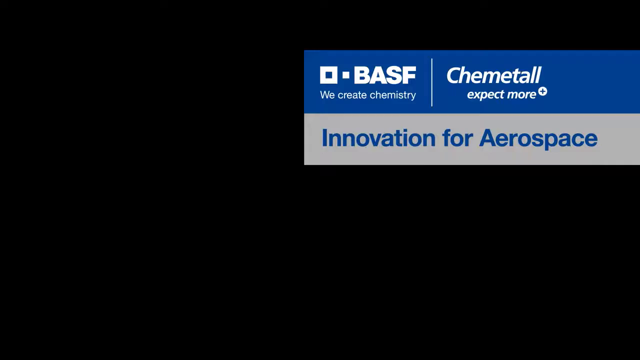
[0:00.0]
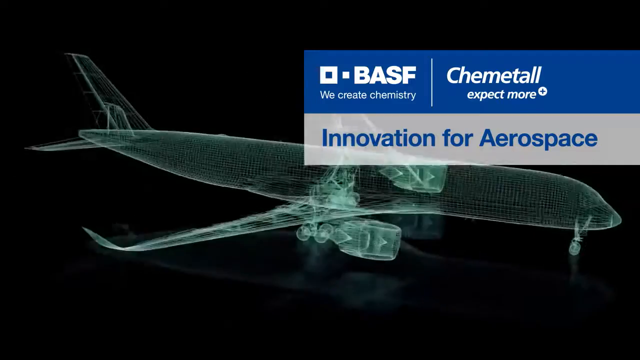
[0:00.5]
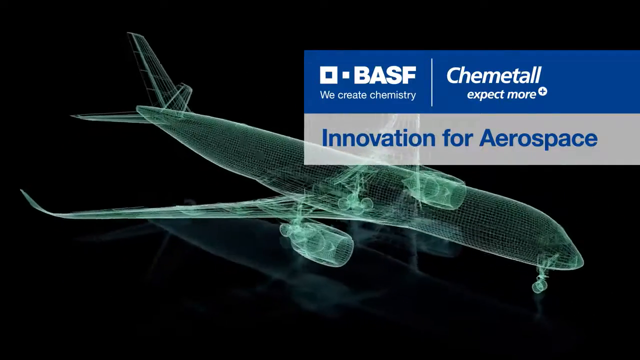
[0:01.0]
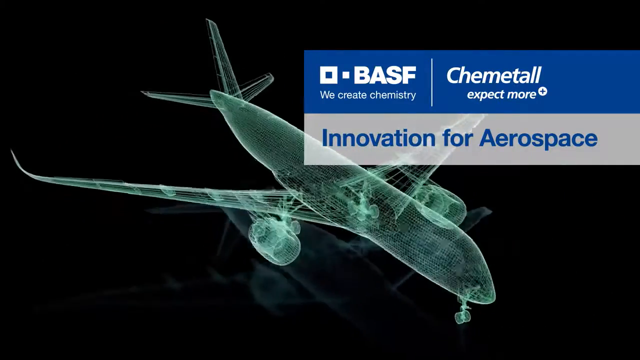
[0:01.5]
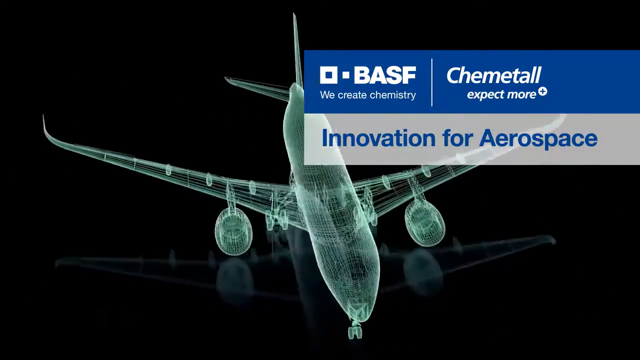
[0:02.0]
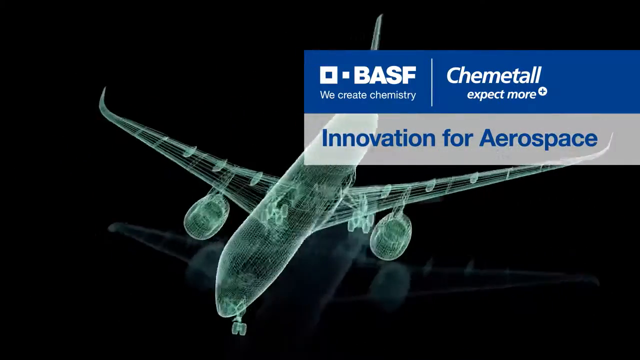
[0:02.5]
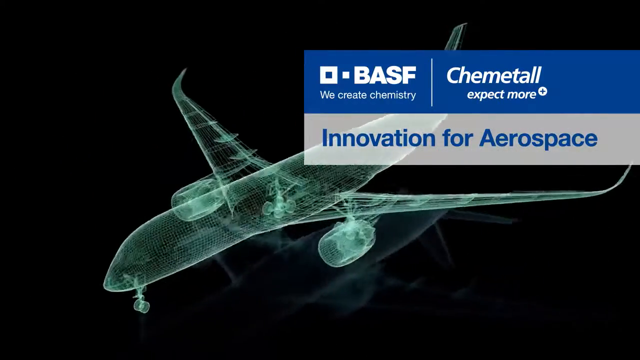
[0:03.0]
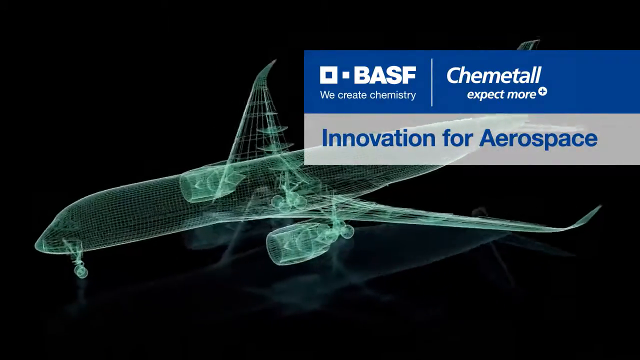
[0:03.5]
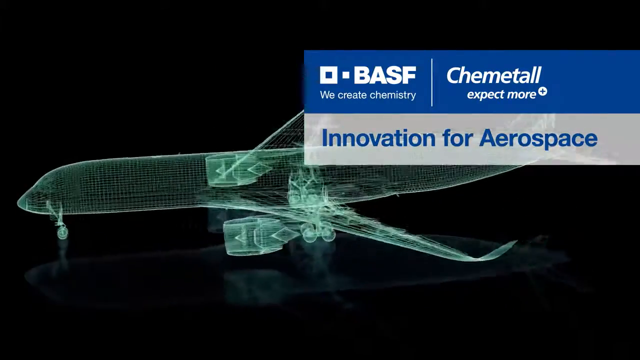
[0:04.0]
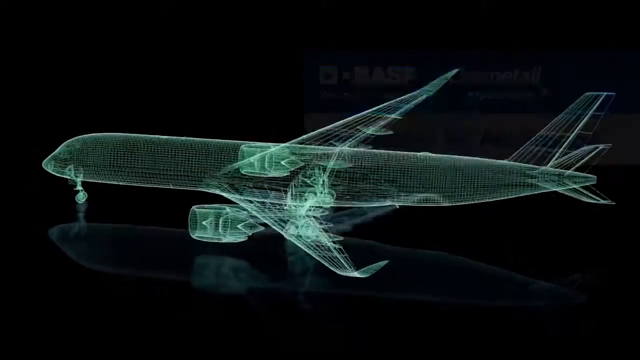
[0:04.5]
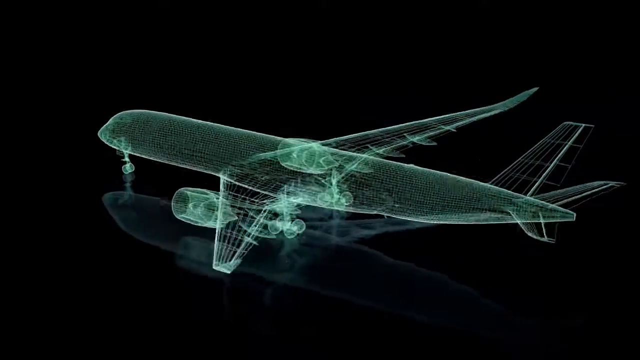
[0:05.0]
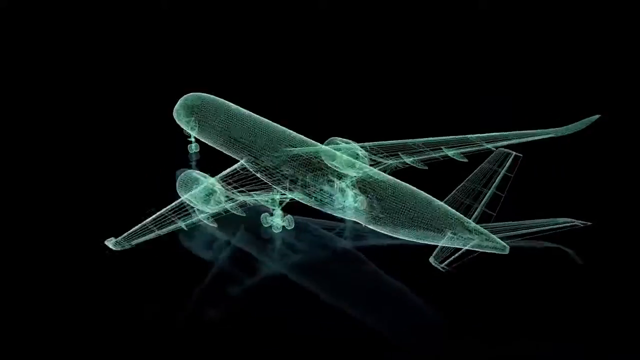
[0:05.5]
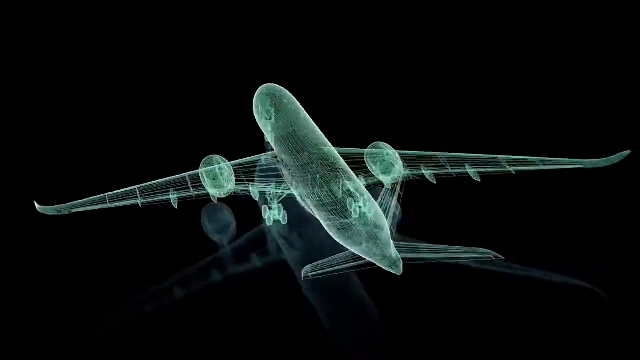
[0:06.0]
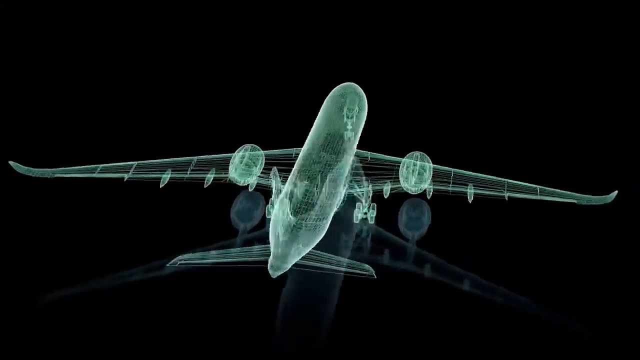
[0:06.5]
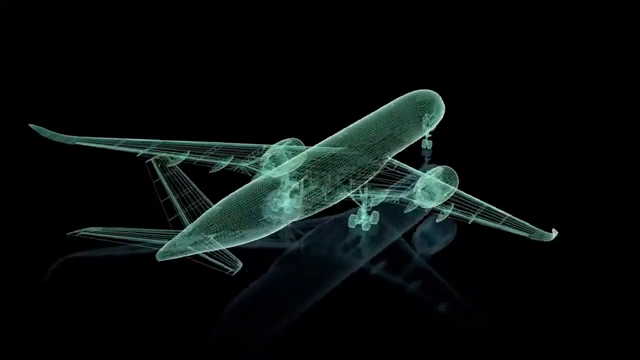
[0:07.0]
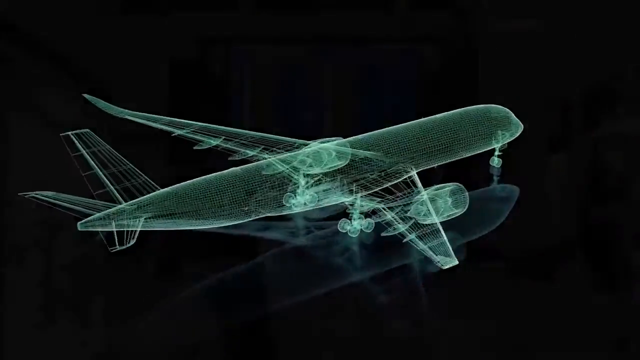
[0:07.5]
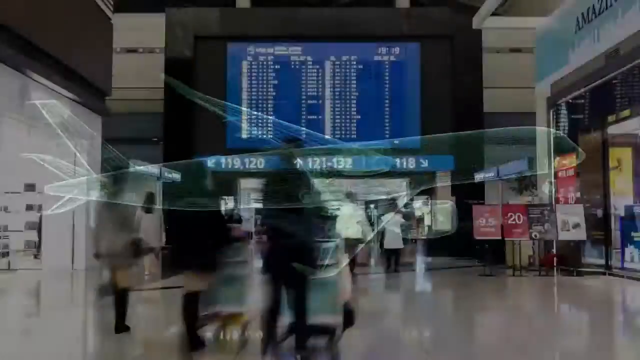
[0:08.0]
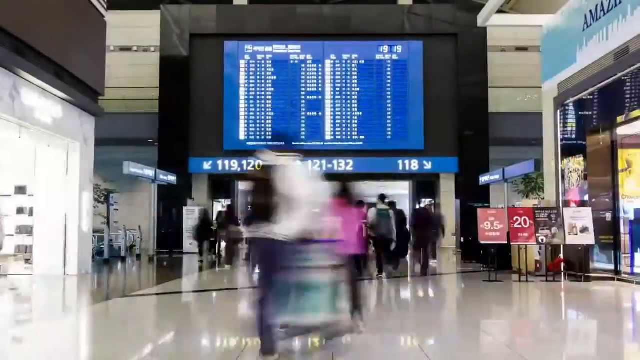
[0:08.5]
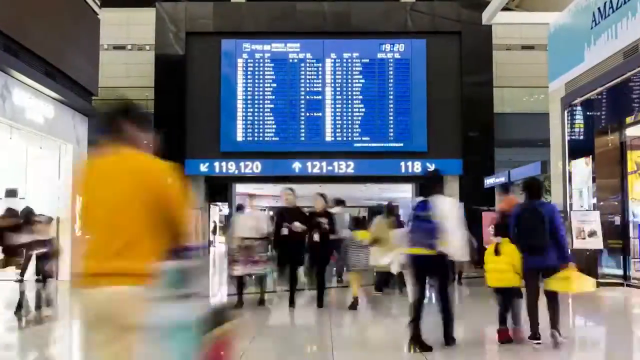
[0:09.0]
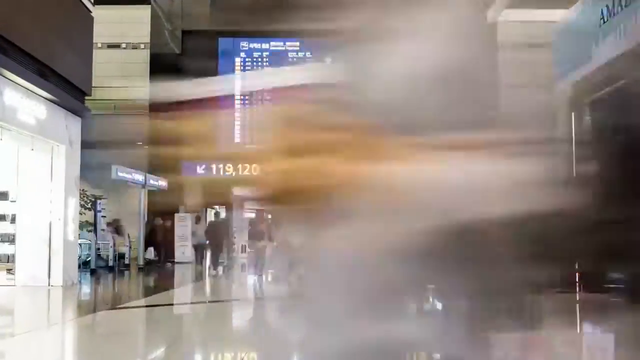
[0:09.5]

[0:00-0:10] The video opens on a black screen with a rectangular logo on the upper right side. The rectangle is split into a top and a bottom part. The top part is a purplish color with white font reading "BASF," with a square in front of it, and "we create chemistry." Then there is a line, and to the right of it the text reads "Chemetall," with "expect more" underneath and a little white circle with a plus sign inside. The bottom section is gray, with purple font reading "innovation for aerospace." The video then transitions to a background image of an airplane: a 3D image that looks like a computer graphic, a diagram showing all the different parts of the airplane. It is see-through, showing the schematics as if designed on some kind of sketch, and it spins in circles to give a 360-degree 3D view. The image then changes to the inside of an airport, where lots of people walk toward an airport gate. On the left, signs read gates "119" and "120"; in the middle, "121" through "132"; and on the right, "118," with arrows pointing in the directions of those gates. At the top is a gigantic screen showing flights landing, taking off and arriving. The footage is sped up, showing people walking very quickly in and out and back and forth.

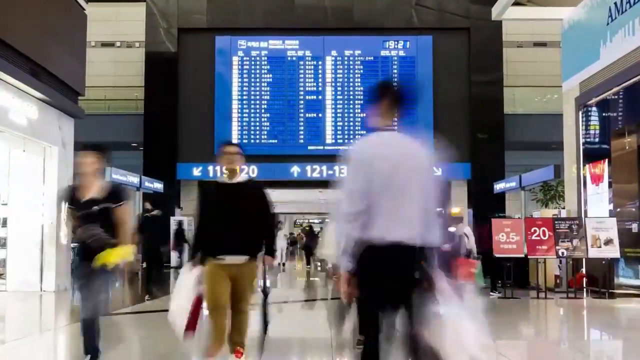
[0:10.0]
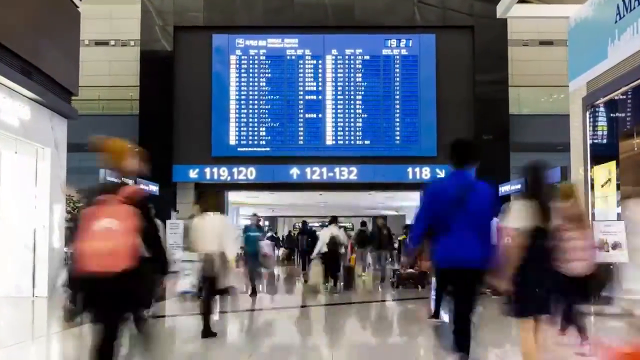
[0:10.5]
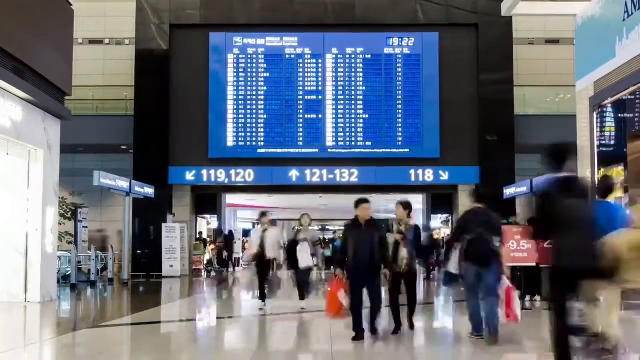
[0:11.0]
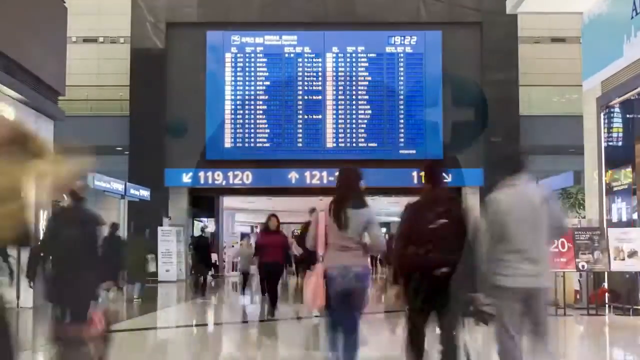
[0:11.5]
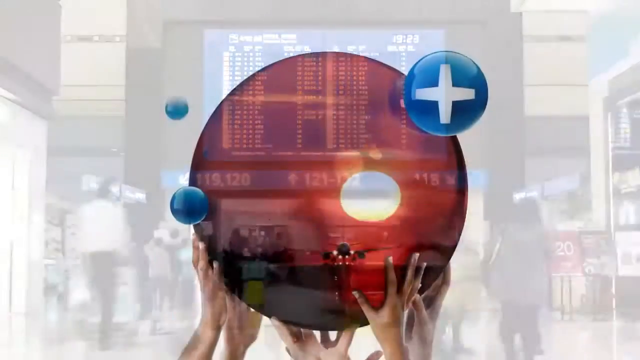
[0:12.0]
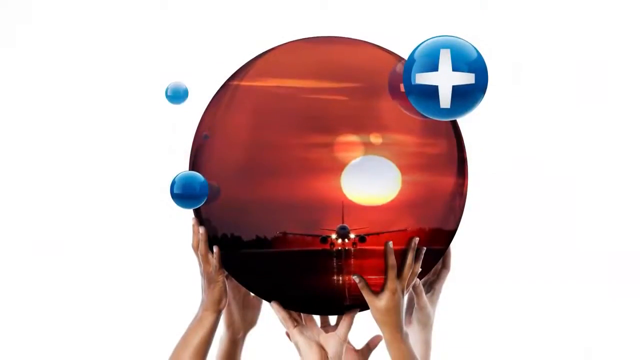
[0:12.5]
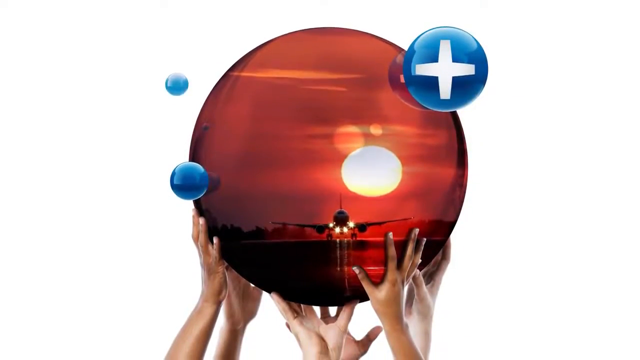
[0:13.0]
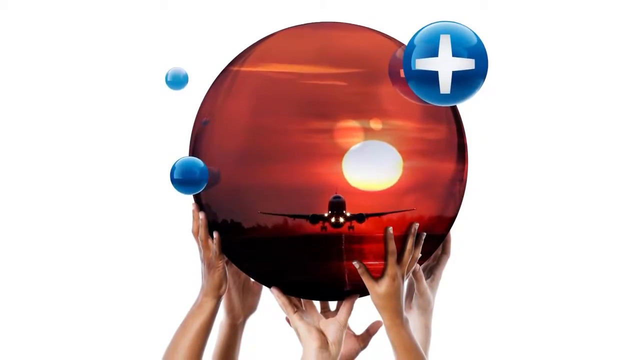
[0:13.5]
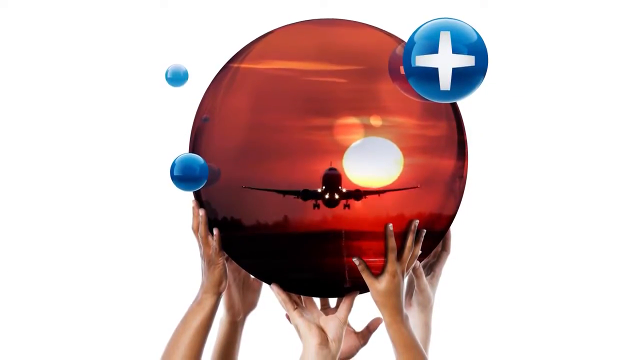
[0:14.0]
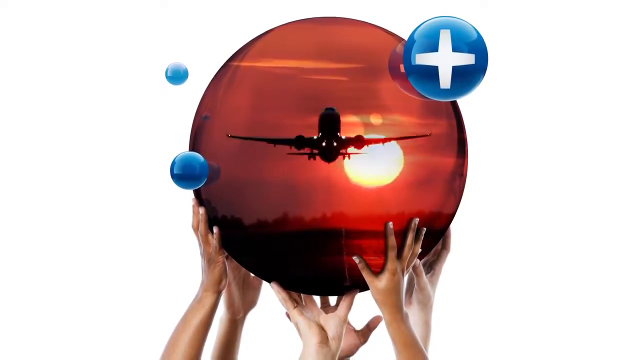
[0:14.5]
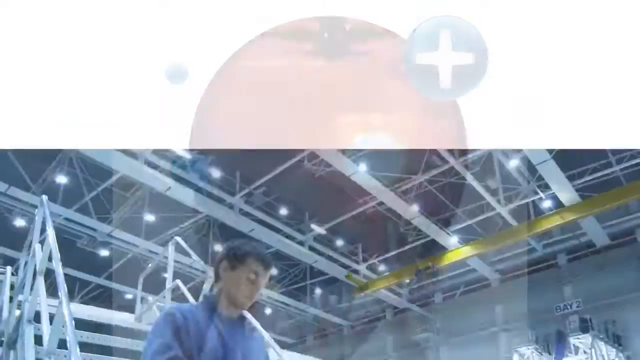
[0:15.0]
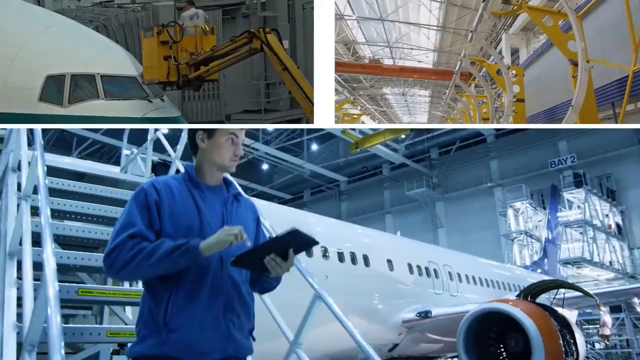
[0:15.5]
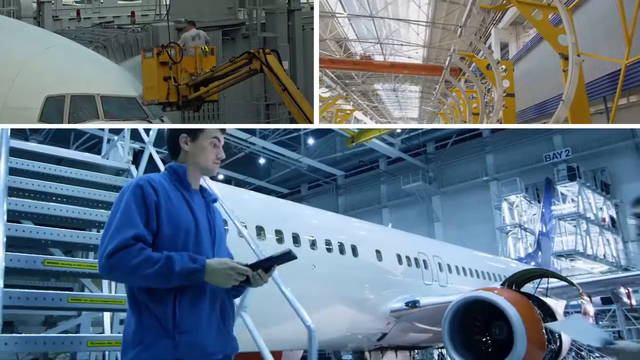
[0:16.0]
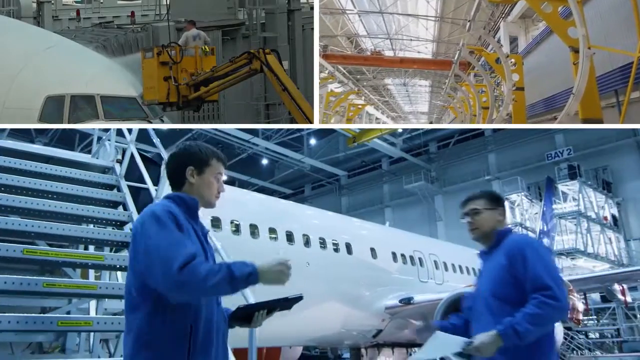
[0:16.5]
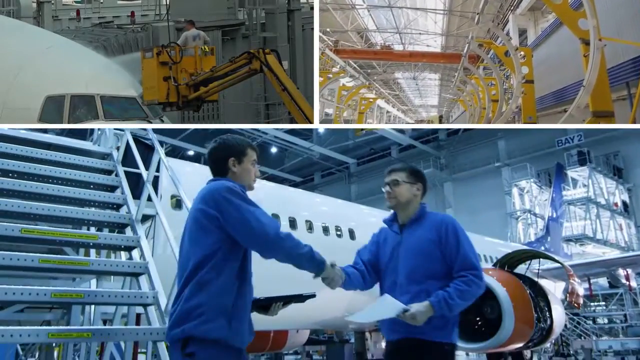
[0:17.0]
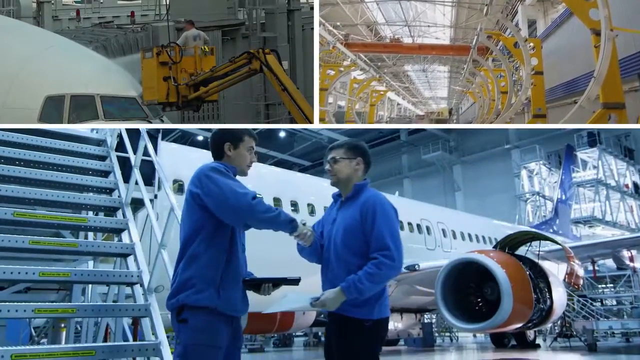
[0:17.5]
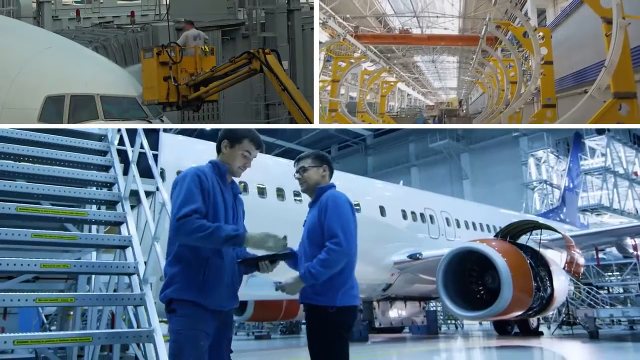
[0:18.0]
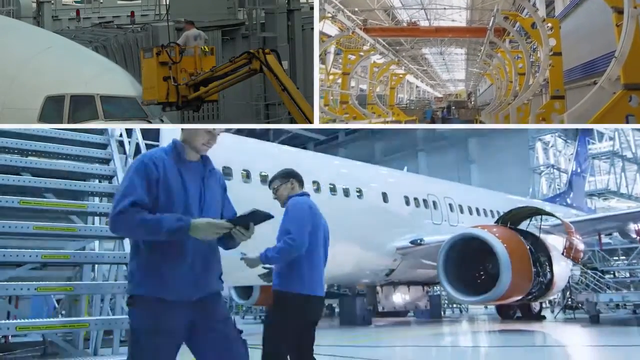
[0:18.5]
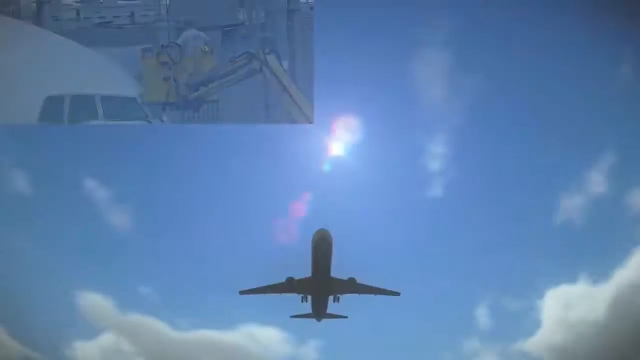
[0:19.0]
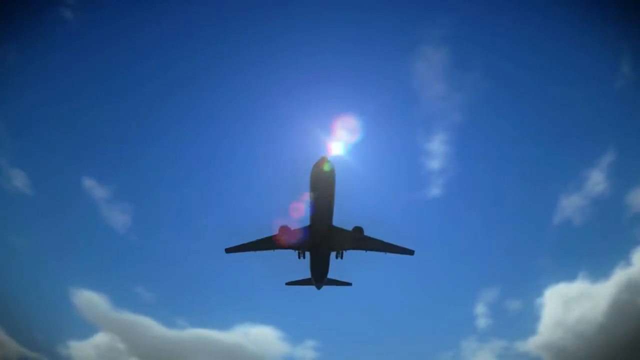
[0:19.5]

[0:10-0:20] Inside an airport, a time lapse shows people walking through and from a gate very quickly, apparently hundreds of people moving back and forth. At the top of the image is a gigantic monitor showing planes coming in and taking off, with a time in the upper right corner reading "1922" and an arrow in the bottom left corner of the monitor. A rectangular border at the bottom has white font showing where the gates are: an arrow with "119" and "120," an arrow in the middle with "121" through "132," and "118" on the right. The image changes to a 3D image of a gigantic metallic ball reflecting an airplane on a tarmac, which looks like it is landing, with a sunset behind it. Small blue balls surround it, one with a white plus sign in it, and hands hold up the ball. As the video plays, the plane in the ball takes off and flies off the tarmac into the air. The scene then changes into three separate screens: one upper left, one upper right, and a big one on the bottom. In the upper left, a man inside some kind of yellow crane is at the front of a plane doing something to it, apparently just washing it with water. In the upper right are some yellow and white brackets in what looks like the inside of an airplane hangar. At the bottom, someone walks up to a man at the bottom of some steps in front of an airplane and shakes his hand. The man on the right wears glasses and a blue suit; the man on the left wears no glasses, also wears a blue suit, and holds some kind of pad in his left hand. They shake hands with their right hands and then walk away from each other. The scene then changes to an underside view of an airplane flying through the air.